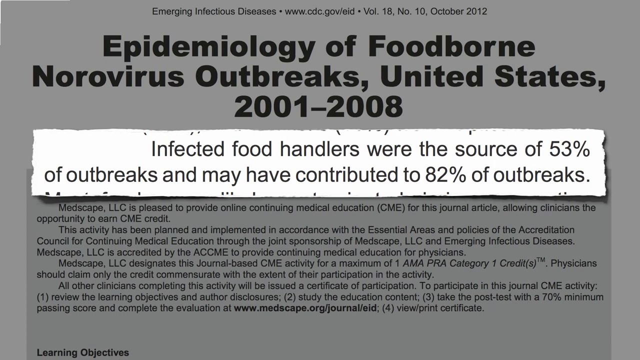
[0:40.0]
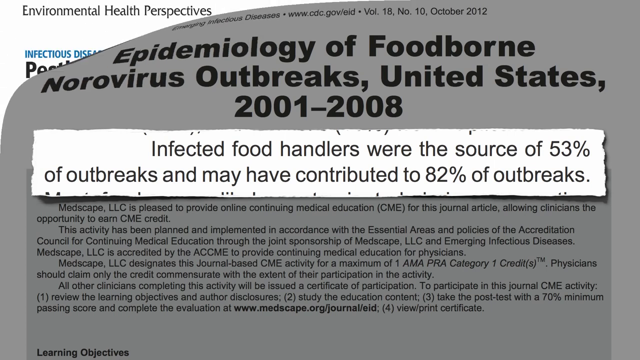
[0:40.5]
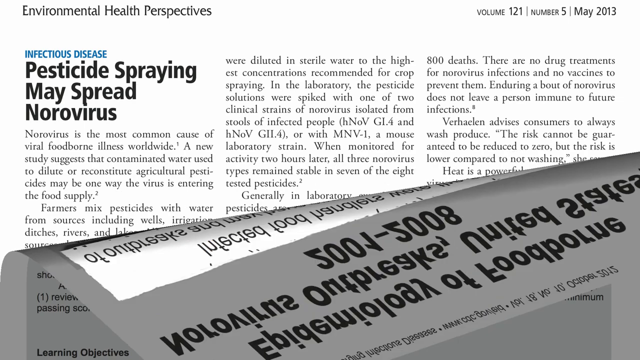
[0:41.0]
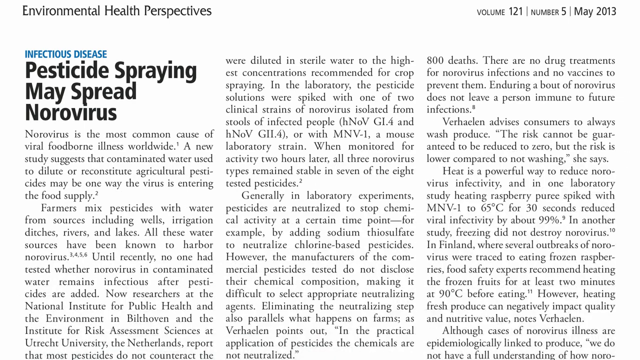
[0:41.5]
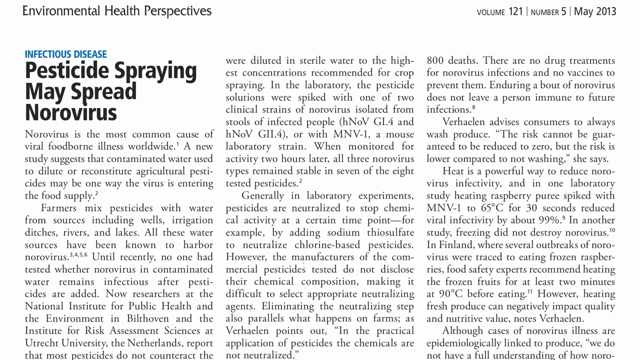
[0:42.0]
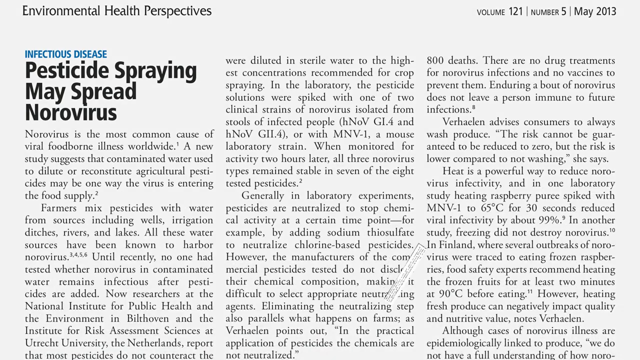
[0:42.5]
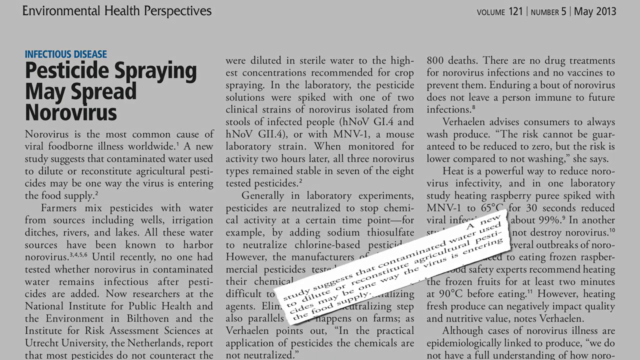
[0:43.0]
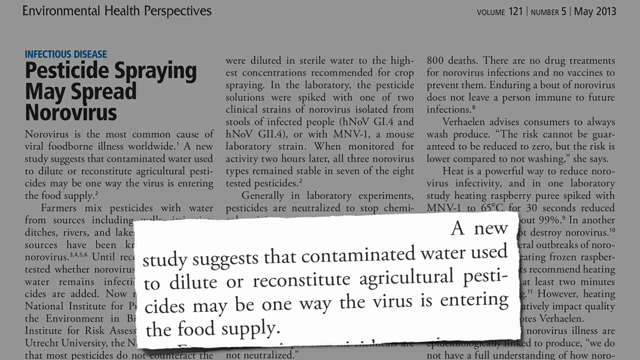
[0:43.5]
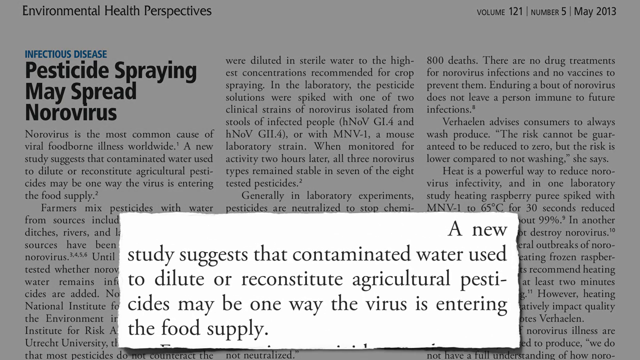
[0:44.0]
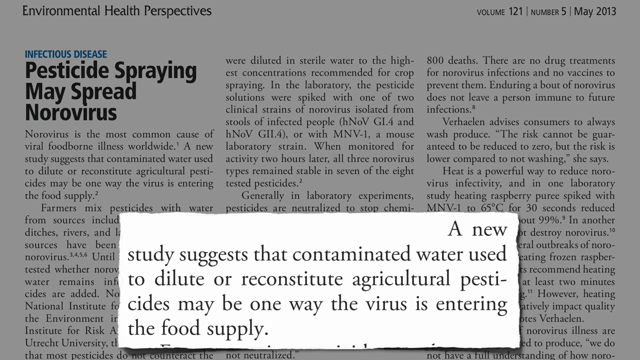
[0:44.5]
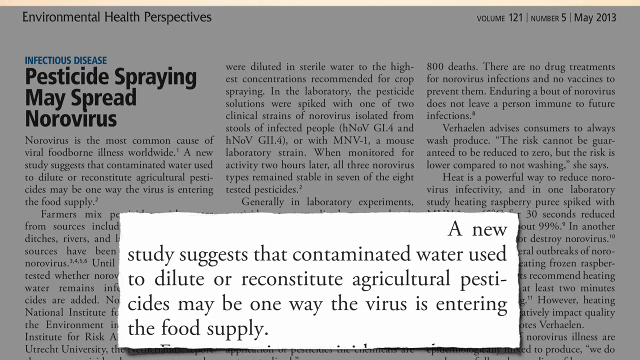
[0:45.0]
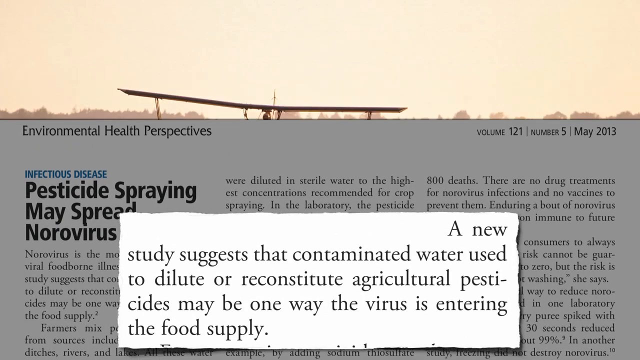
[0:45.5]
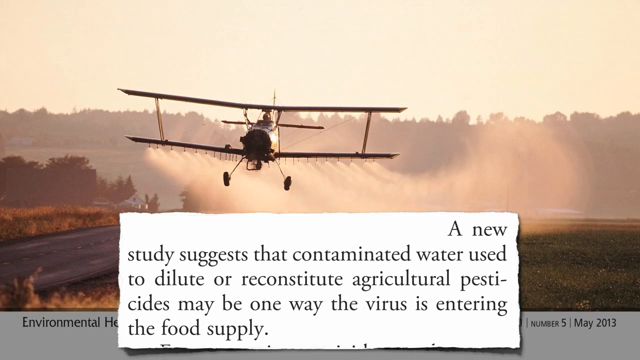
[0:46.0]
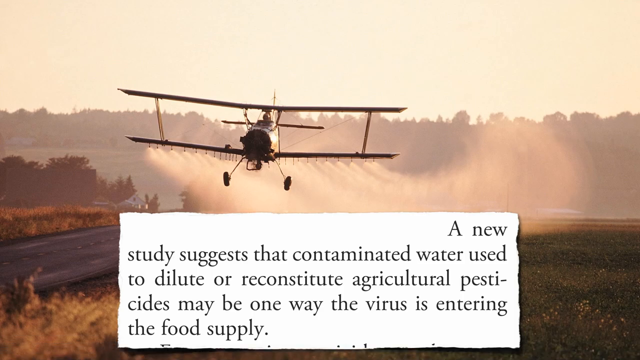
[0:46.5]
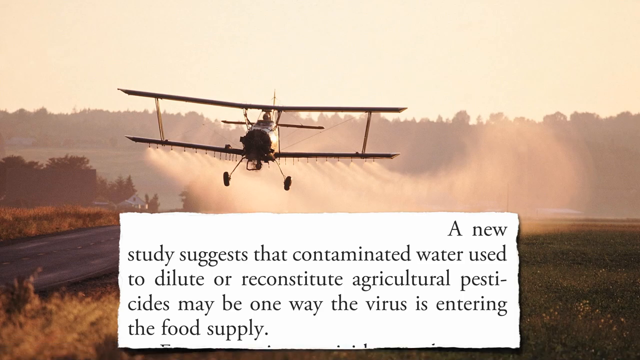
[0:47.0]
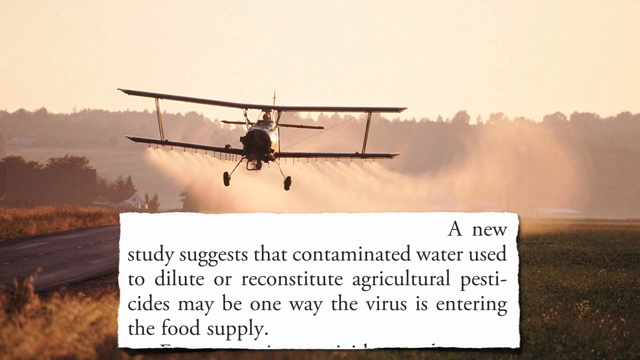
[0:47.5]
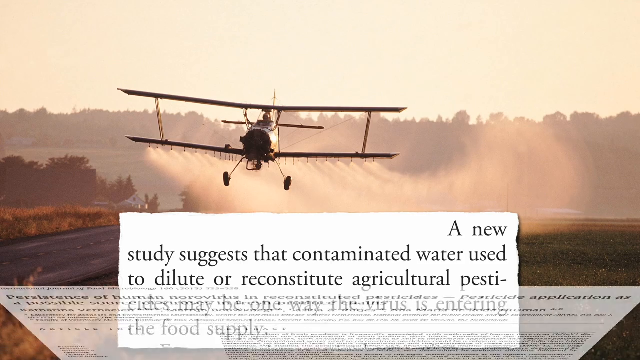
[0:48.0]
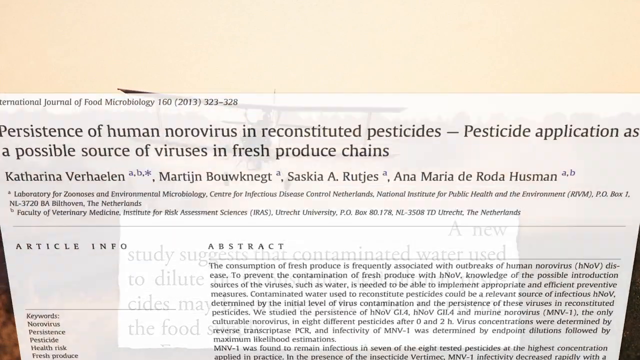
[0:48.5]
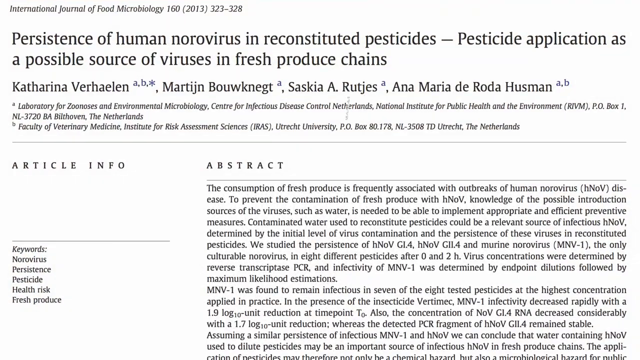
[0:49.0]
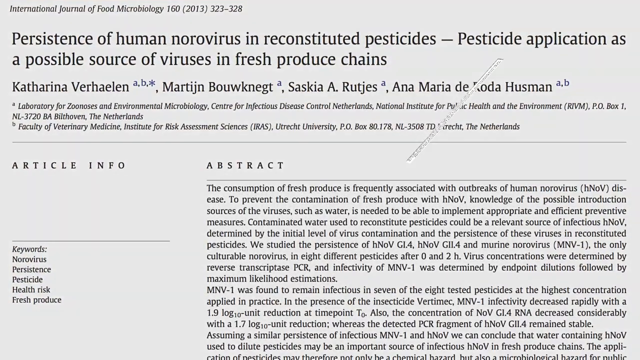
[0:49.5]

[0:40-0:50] The current article is peeled away from the top left corner to the bottom right corner, revealing another article laid out in three columns, with its title in the top left of the first column. The publication is "Environmental Health Perspectives," with what may be a category reading "infectious disease," and the article is titled "Pesticides Spraying May Spread Norovirus." A quote flips open like a piece of paper, reading "a new study suggests that contaminated water used to dilute or reconstitute agricultural pesticides may be one way the virus is entering the food supply." While this quote shows at the bottom middle, the article is peeled away and a very orange photo of an airplane on a runway appears, taken from the front, with a bunch of steam or wind behind the airplane; the plane looks as if it is descending. A new article is then shown, reading "persistence of human norovirus and reconstituted pesticides. Pesticide application as a possible source of viruses in fresh produce chains," and a quote from it is also shown.